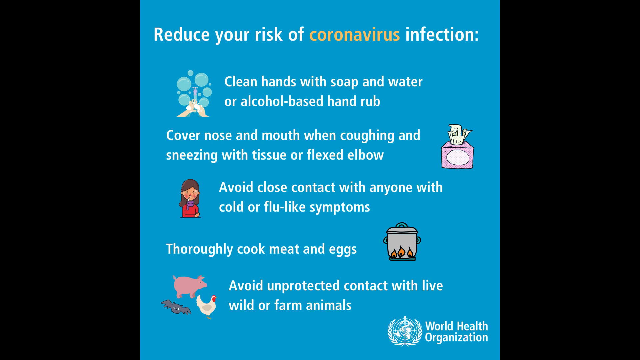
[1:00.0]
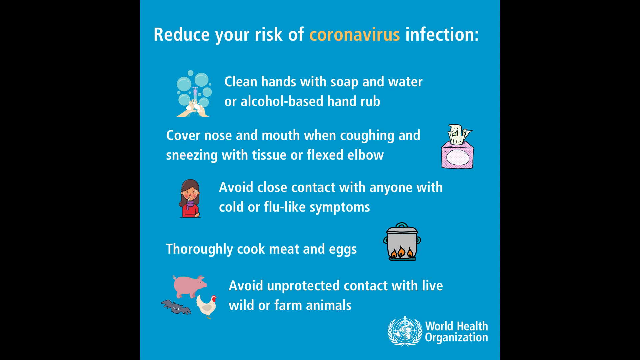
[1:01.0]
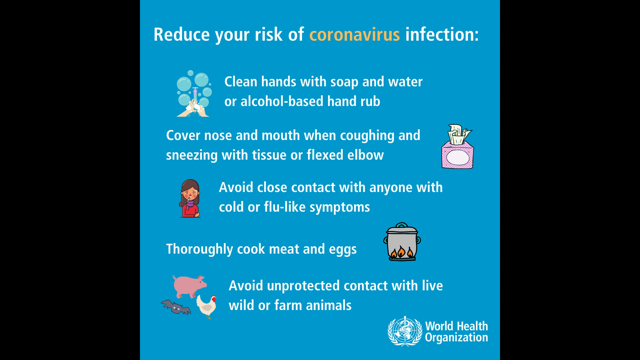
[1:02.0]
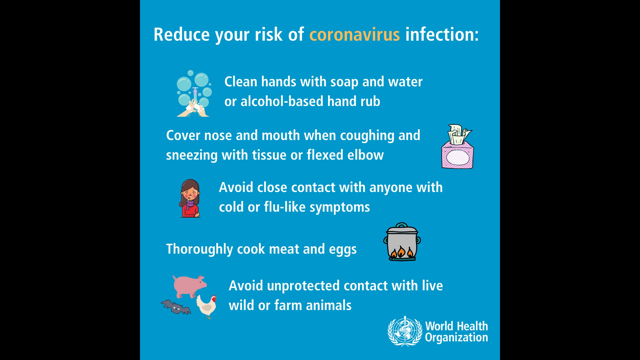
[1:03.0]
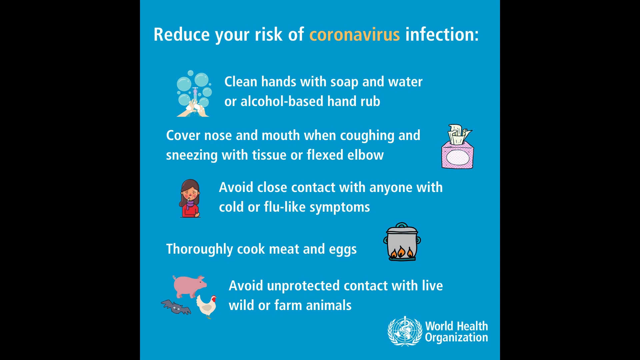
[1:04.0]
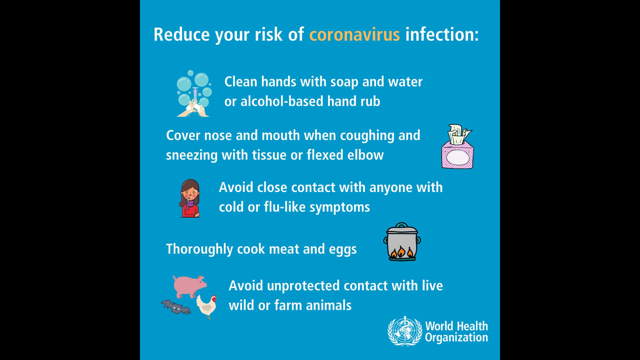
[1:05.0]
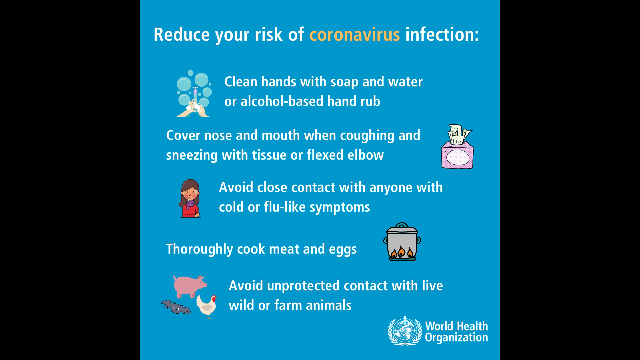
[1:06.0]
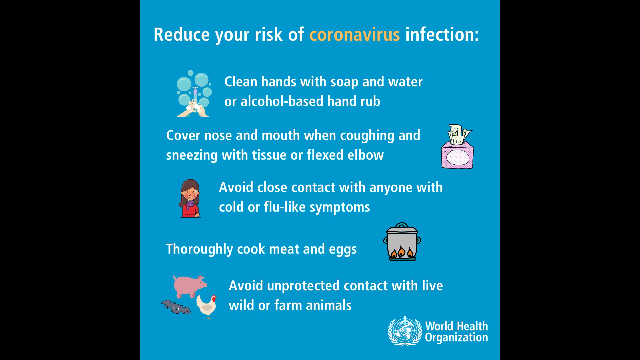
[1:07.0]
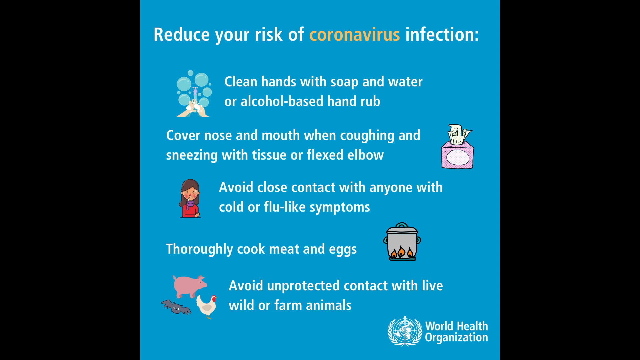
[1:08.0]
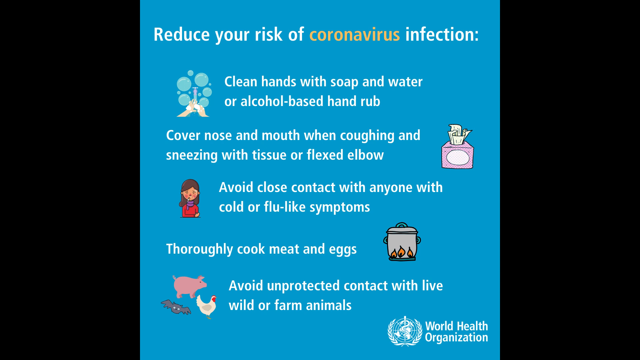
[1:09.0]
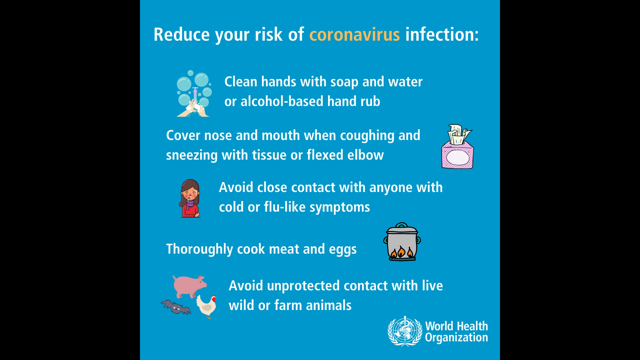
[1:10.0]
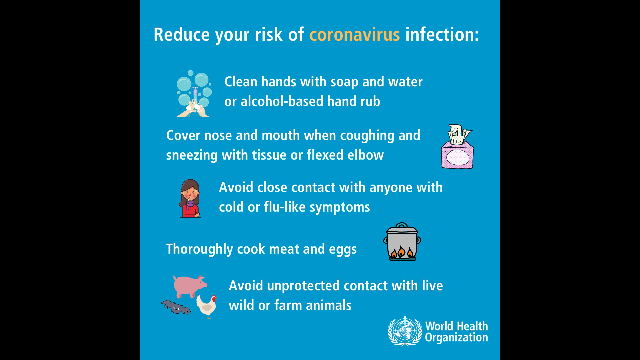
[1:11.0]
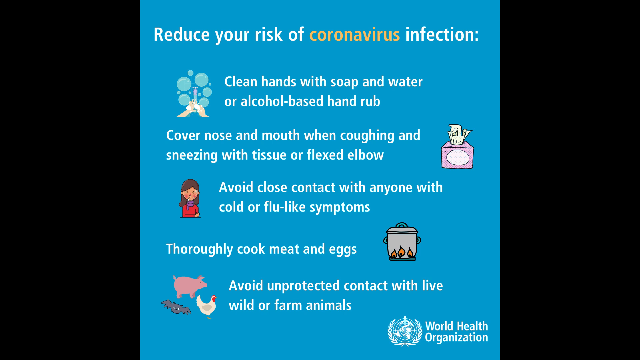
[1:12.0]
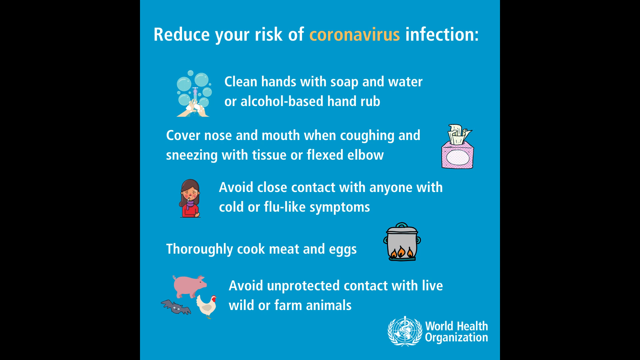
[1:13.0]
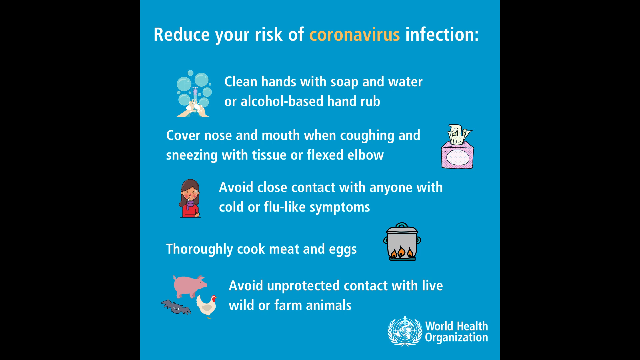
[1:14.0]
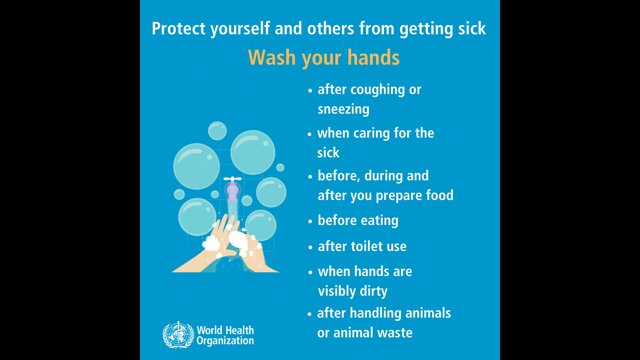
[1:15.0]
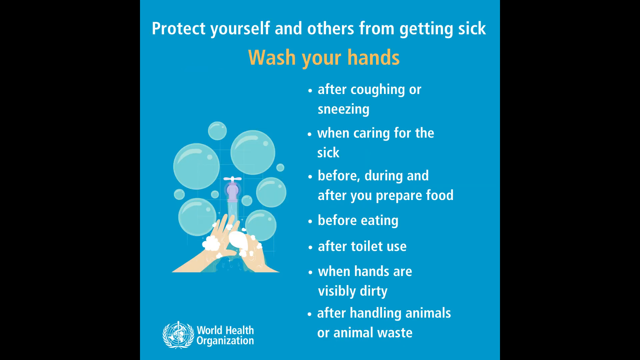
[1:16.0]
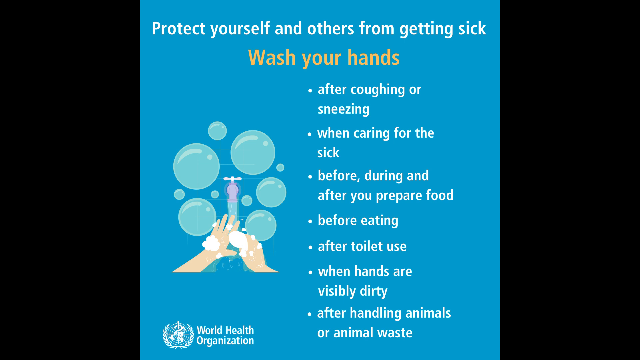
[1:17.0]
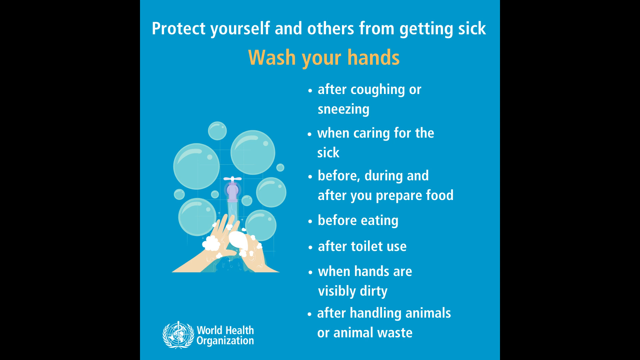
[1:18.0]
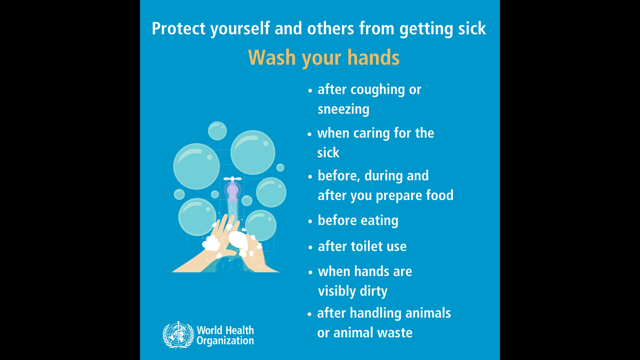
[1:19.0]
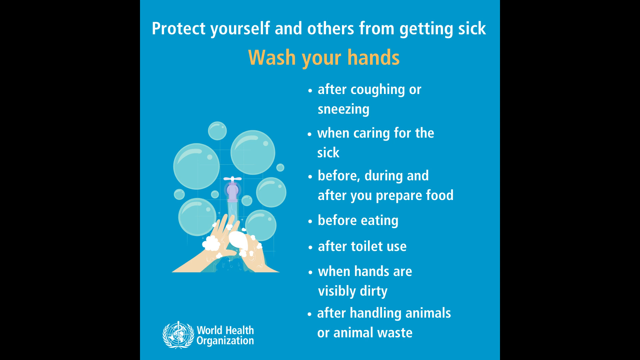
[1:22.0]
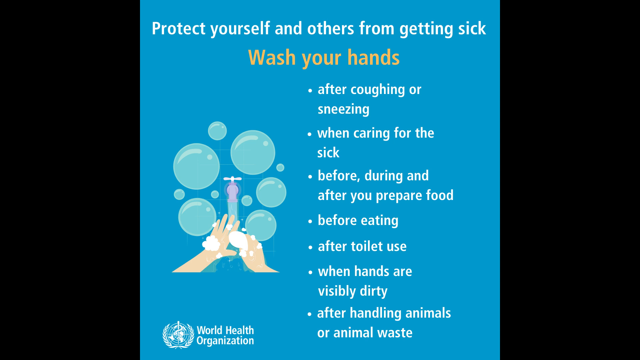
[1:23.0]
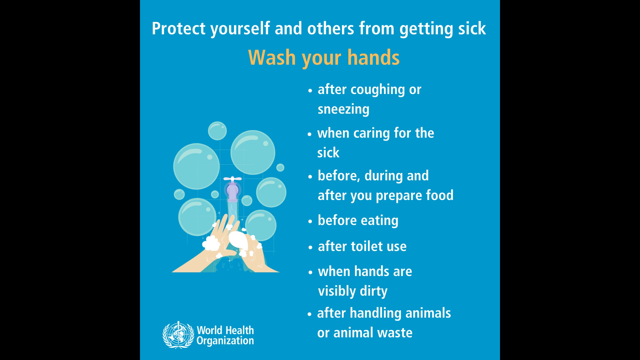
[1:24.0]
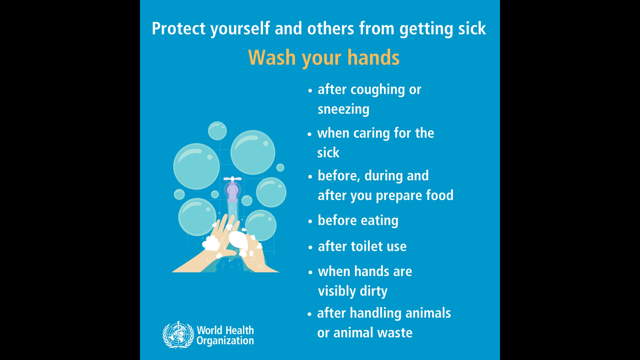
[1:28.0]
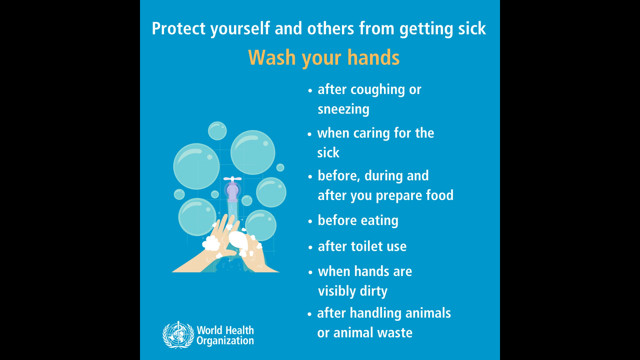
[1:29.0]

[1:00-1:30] The slide about reducing the risk of coronavirus has an all-blue background with images beside the text. It says "clean your hands with soap and water, alcohol-based hand rub," with something like bubbles showing hand washing. It says "cover your nose and mouth when coughing and sneezing with tissue or flexed elbow," with a bottle of tissue on the side. It says "avoid close contact with anyone with cold or flu symptoms," with a cartoonish woman to the side appearing to have a cold or flu. It says "thoroughly cook meat and eggs," with a boiling pot next to it, and "avoid unprotected contact with live wild or farm animals," with pictures of a chicken and a pig next to that text. The video stays on this slide for a little while. Then a close-up shows two hands with soap and bubbles on them. Information follows on when to wash hands: after coughing or sneezing, when caring for the sick, before, during and after preparing food, before eating, after toilet use, when hands are visibly dirty, and after handling animals or animal waste.